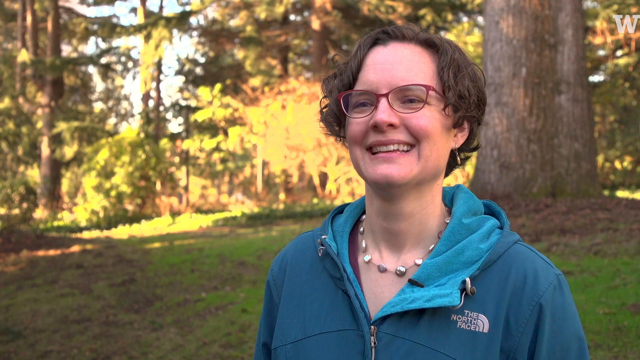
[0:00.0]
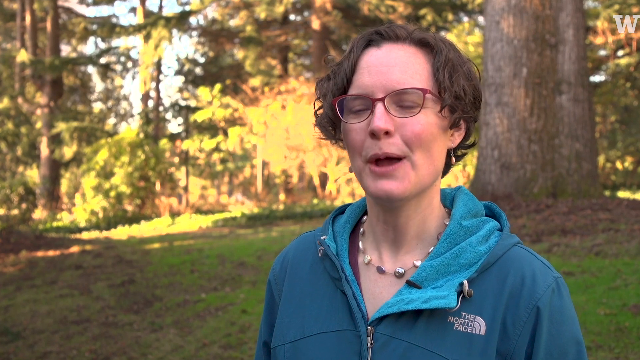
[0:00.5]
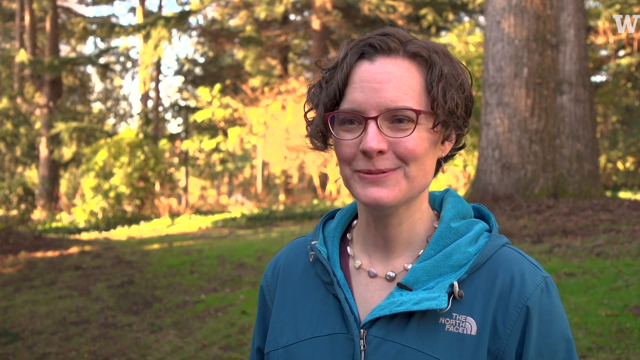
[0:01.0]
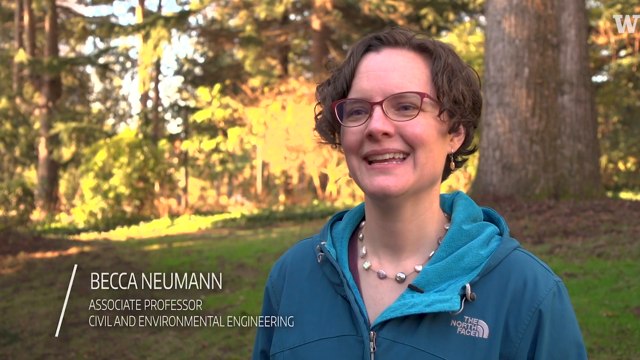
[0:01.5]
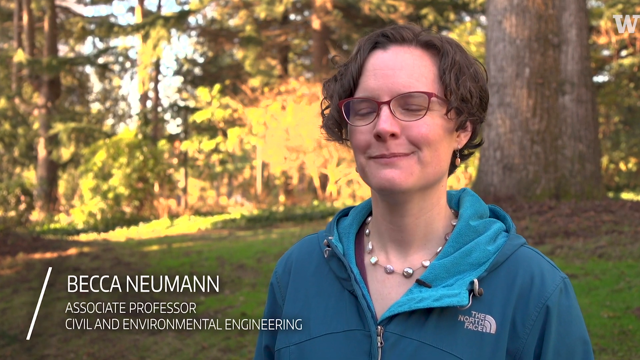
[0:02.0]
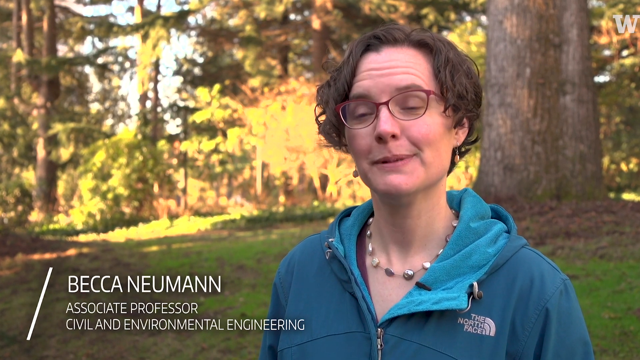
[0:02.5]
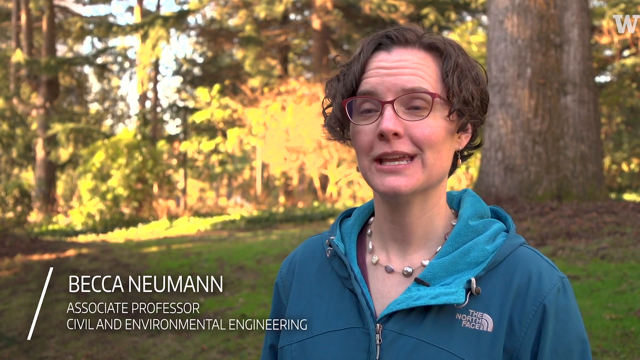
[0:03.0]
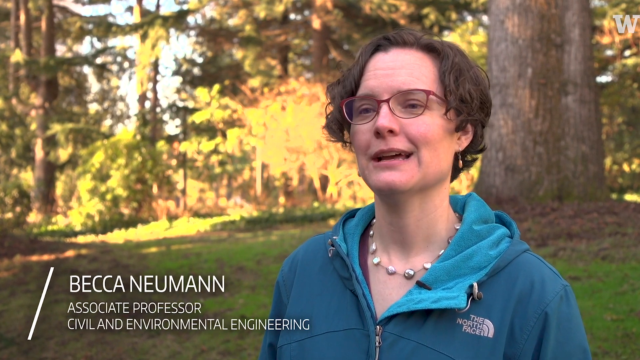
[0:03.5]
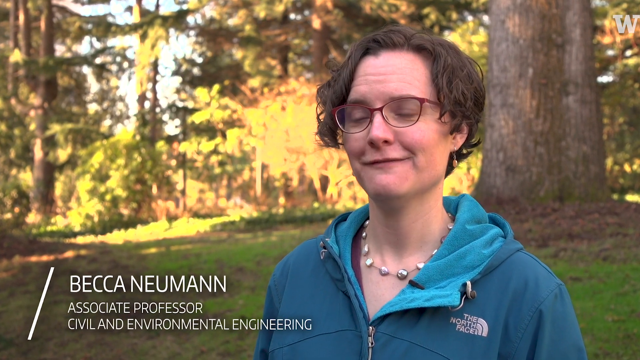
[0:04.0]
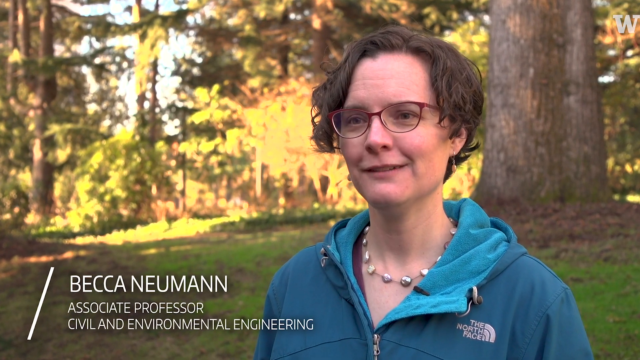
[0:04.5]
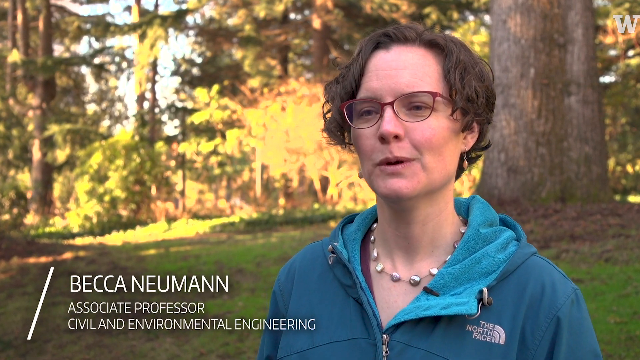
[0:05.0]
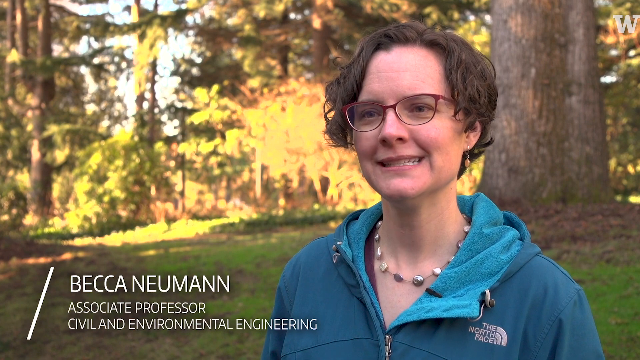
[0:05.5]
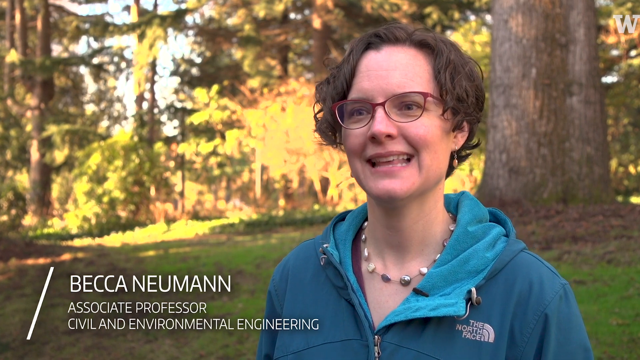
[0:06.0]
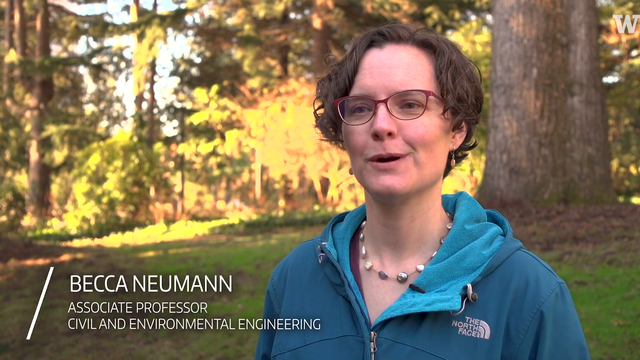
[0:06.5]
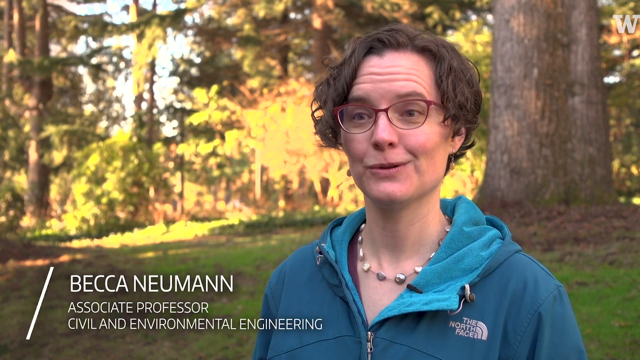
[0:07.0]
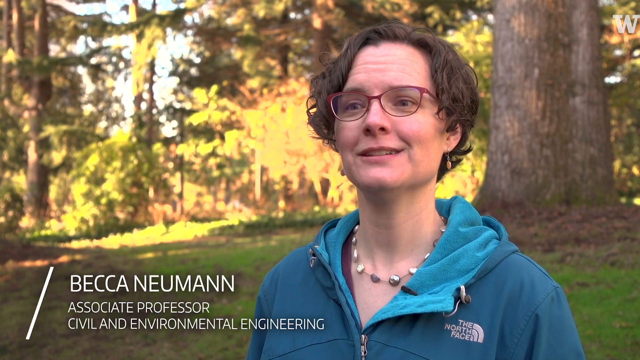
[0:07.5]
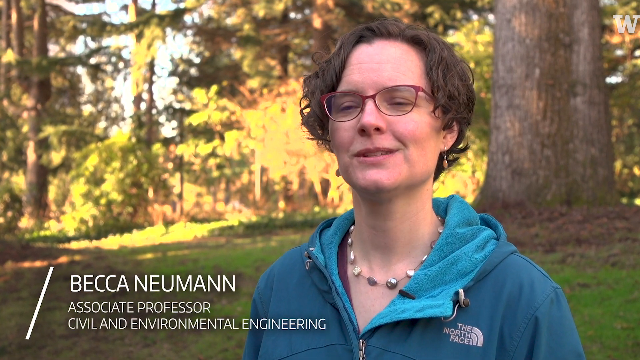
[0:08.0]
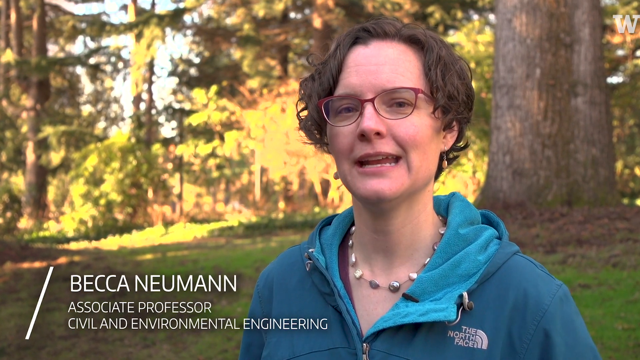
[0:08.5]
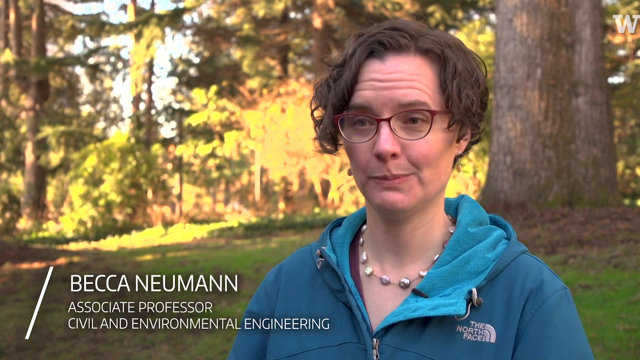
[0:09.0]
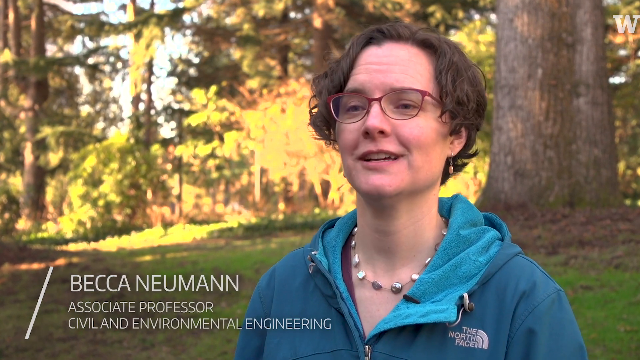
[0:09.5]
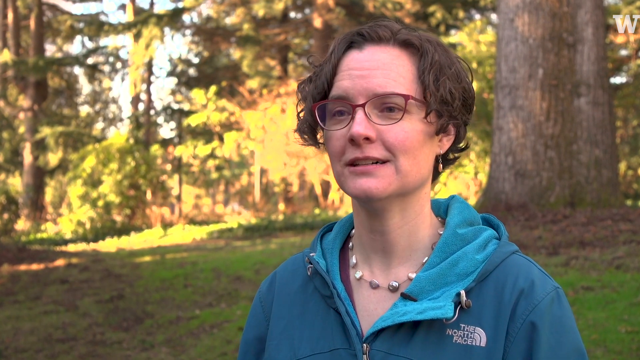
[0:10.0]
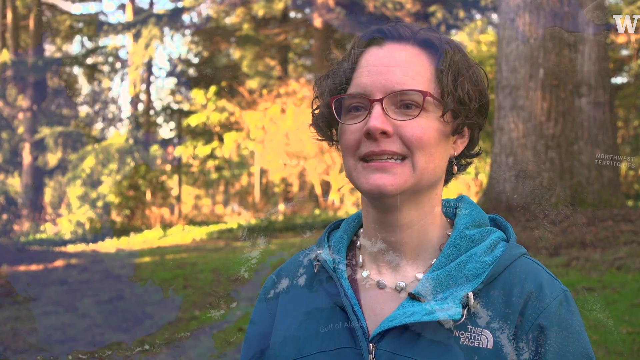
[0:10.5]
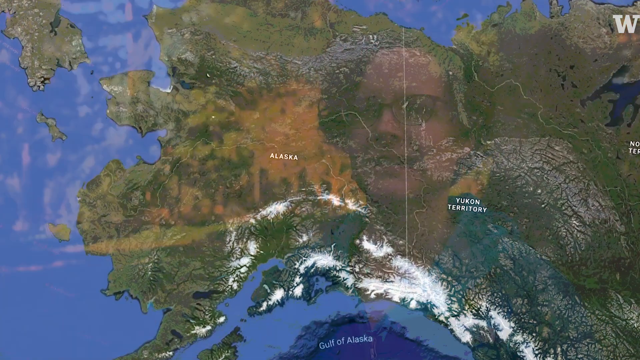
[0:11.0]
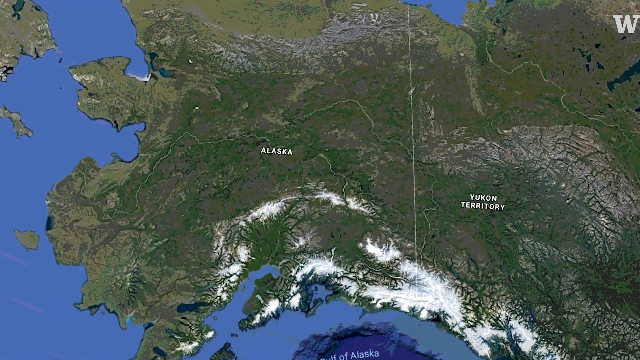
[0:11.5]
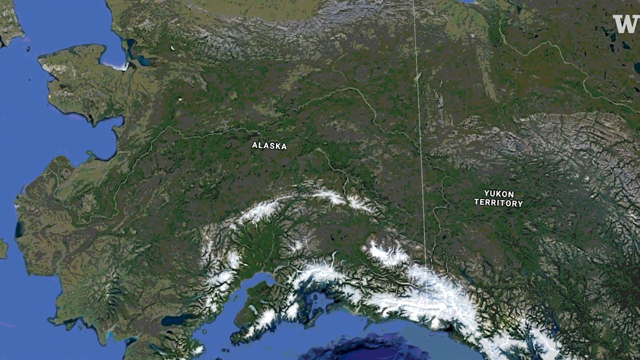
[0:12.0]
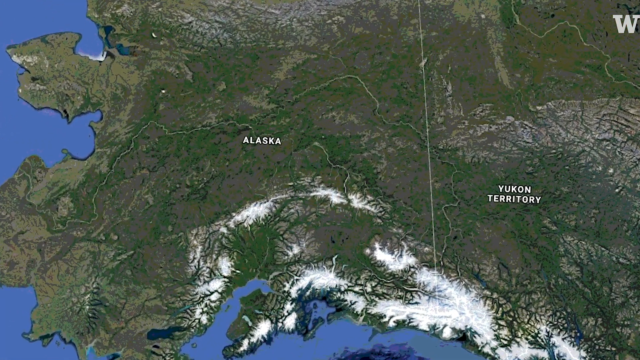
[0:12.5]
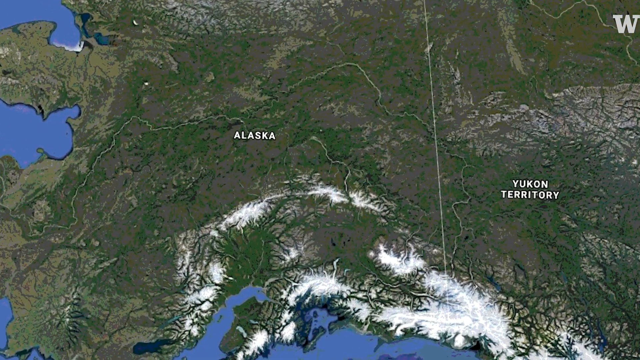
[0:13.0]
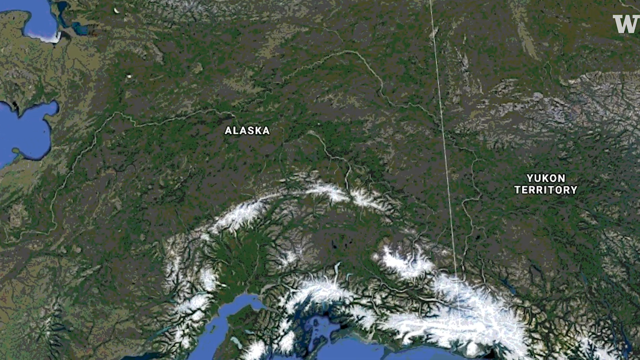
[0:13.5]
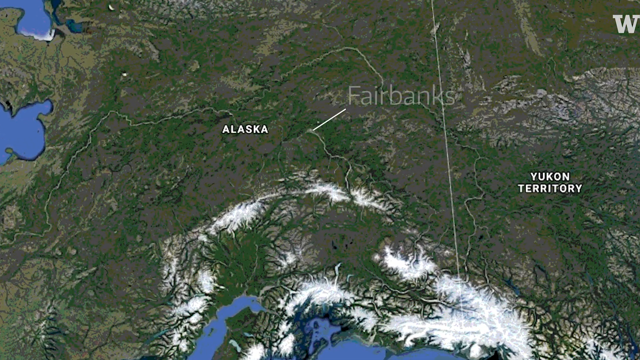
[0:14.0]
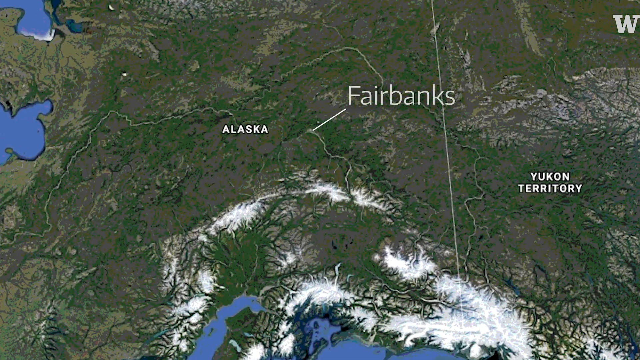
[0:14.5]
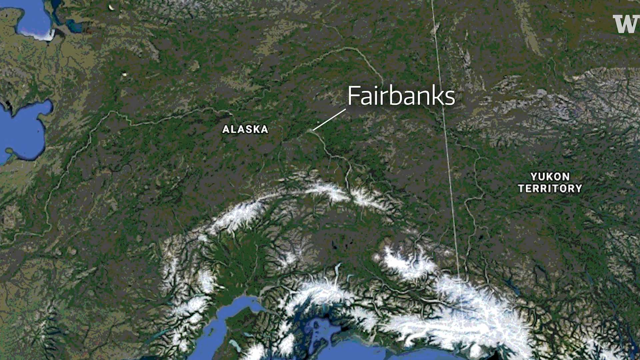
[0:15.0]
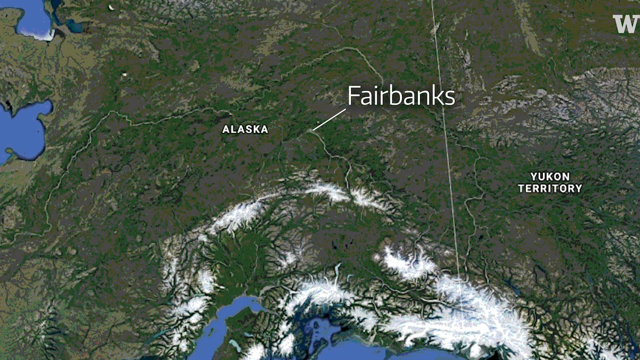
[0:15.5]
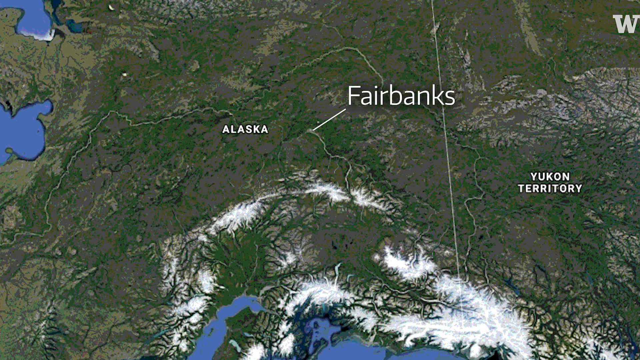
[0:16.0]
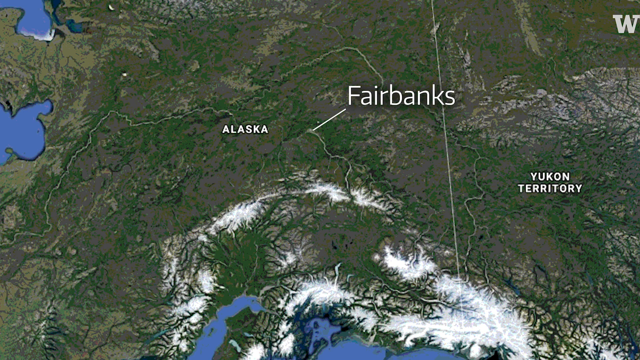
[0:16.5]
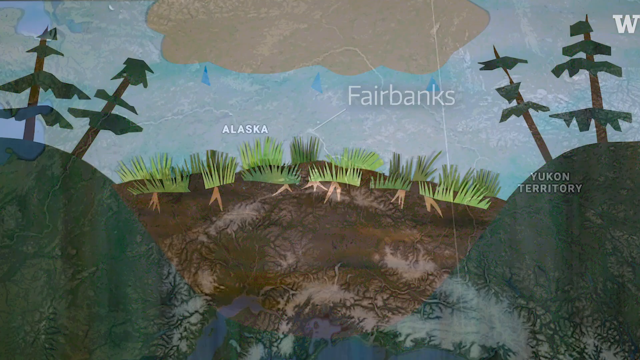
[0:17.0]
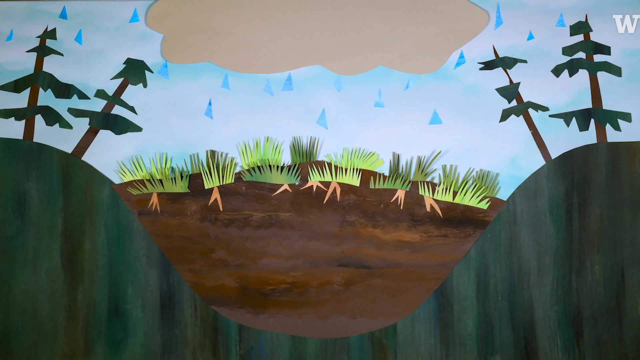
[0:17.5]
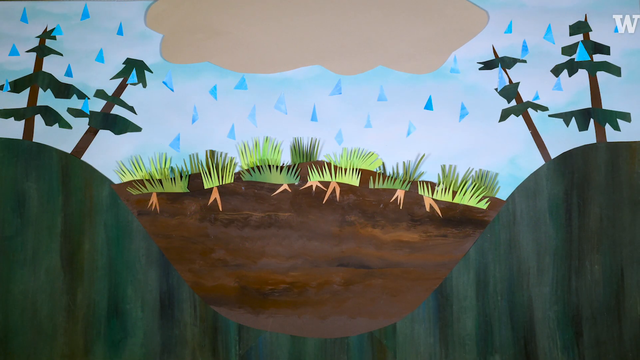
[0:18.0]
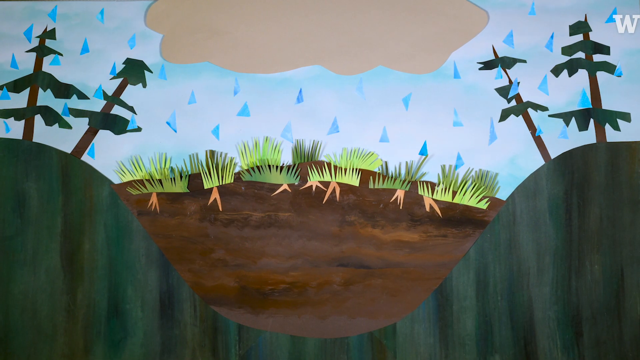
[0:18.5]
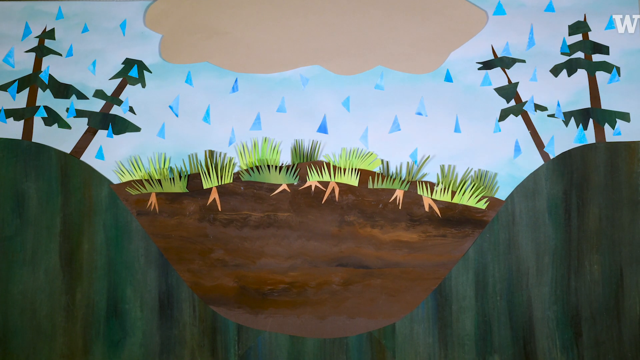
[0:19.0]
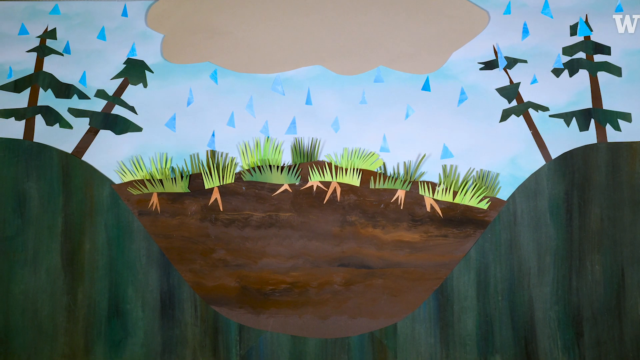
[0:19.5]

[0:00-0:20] A very happy middle-aged woman wearing a blue dress and spectacles, with good-looking hair, is talking. Behind her is daylight, with the sun and trees visible, along with the big trunk of a large tree. Her name is shown on screen: "Beka Newman." The video then cuts to footage showing Fairbanks, Alaska, in the background. After that comes an illustration of rain: rain in the background and rain falling on the ground, with the drops clearly visible.